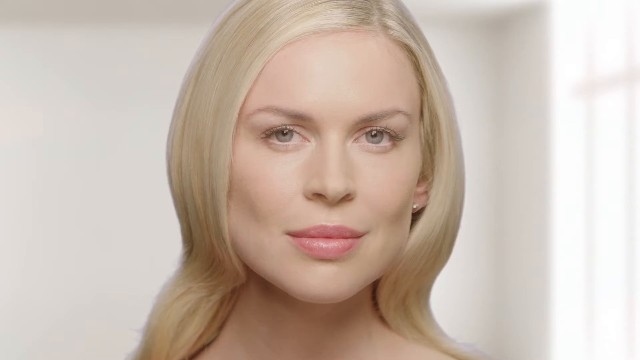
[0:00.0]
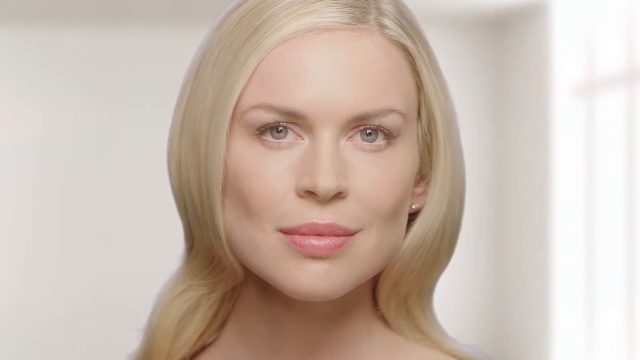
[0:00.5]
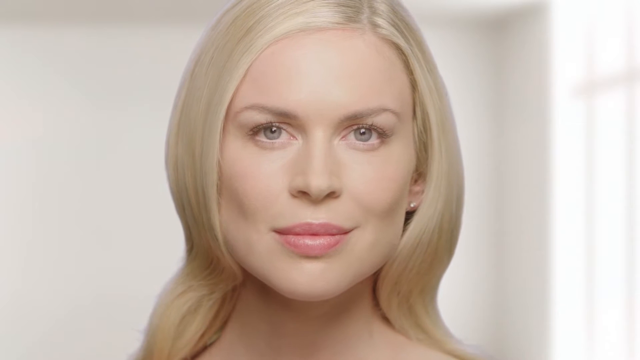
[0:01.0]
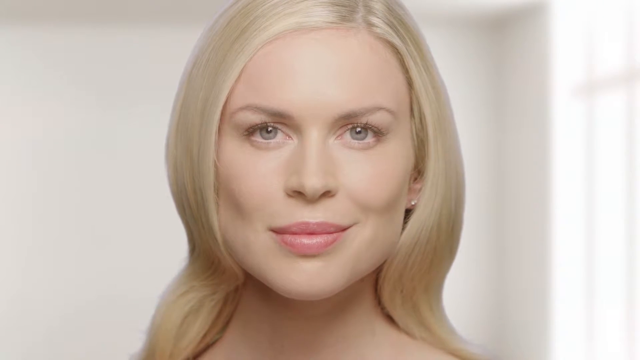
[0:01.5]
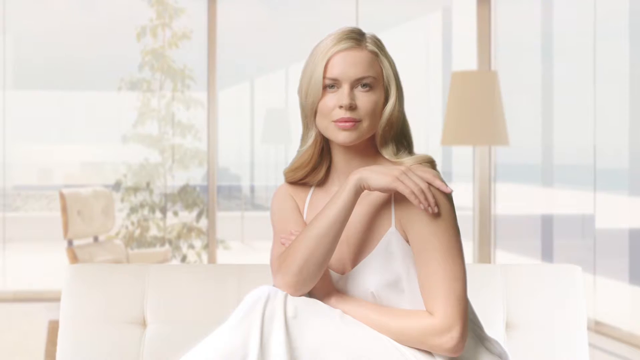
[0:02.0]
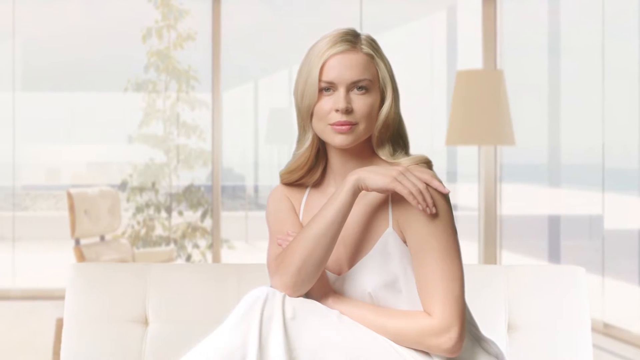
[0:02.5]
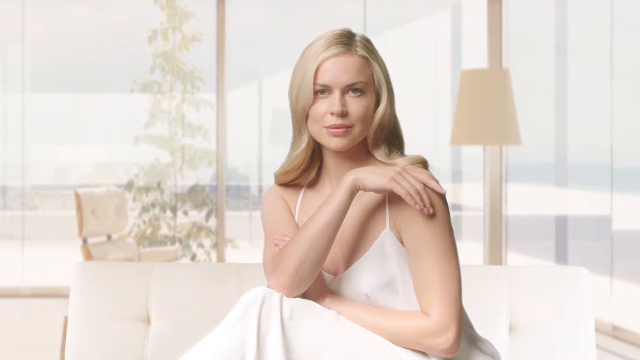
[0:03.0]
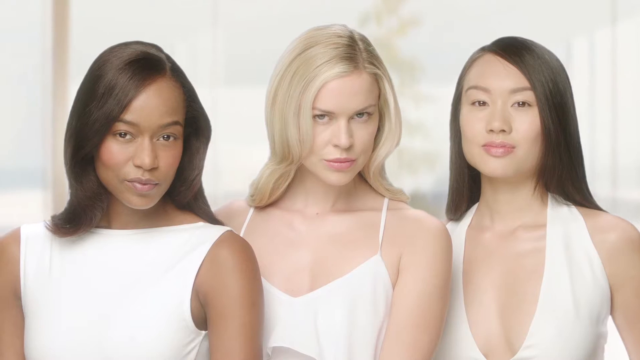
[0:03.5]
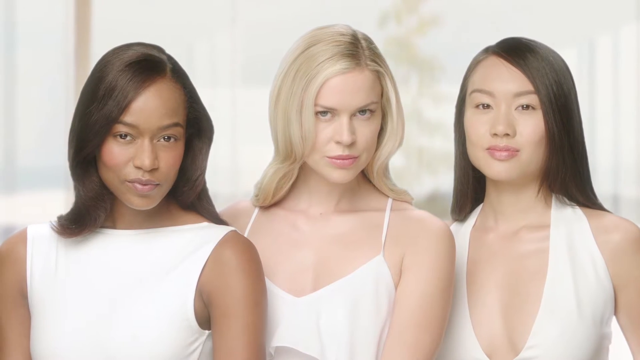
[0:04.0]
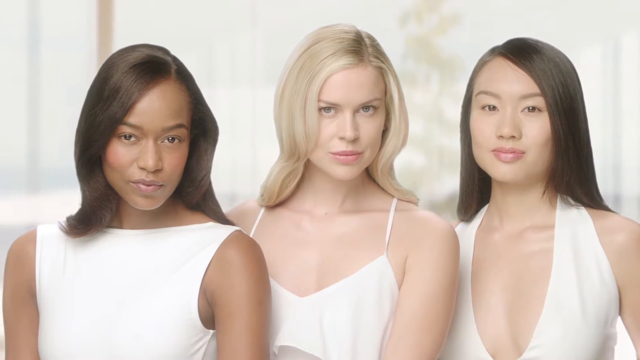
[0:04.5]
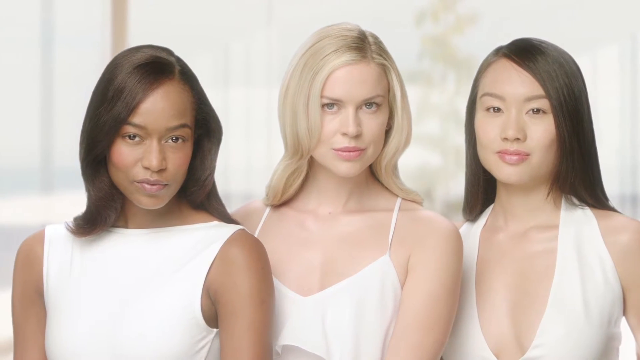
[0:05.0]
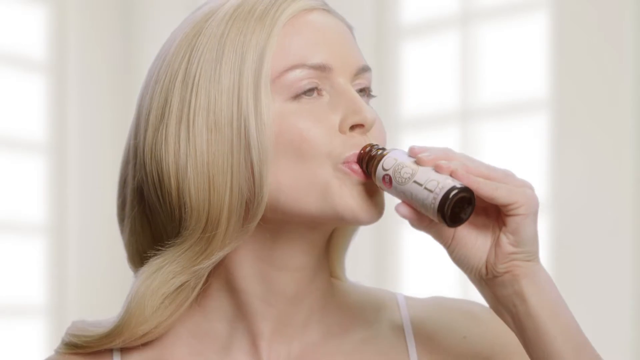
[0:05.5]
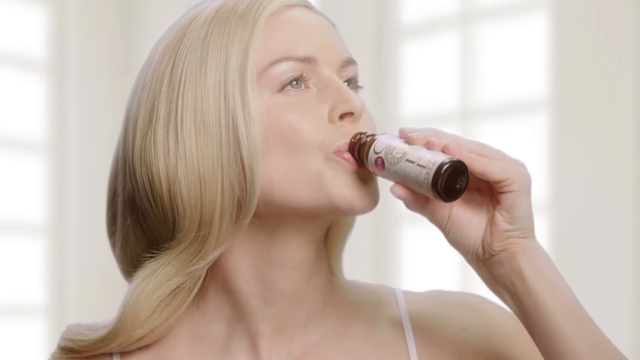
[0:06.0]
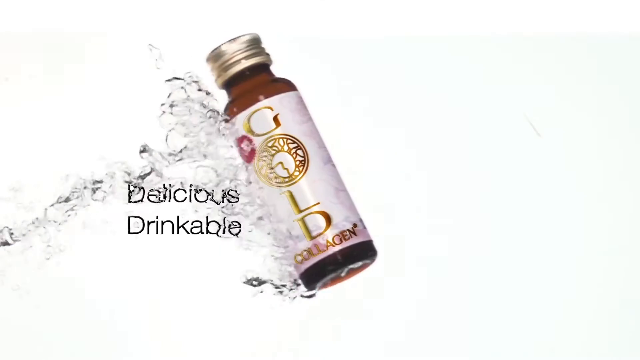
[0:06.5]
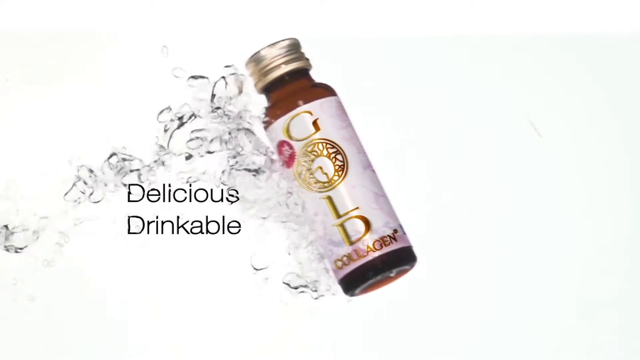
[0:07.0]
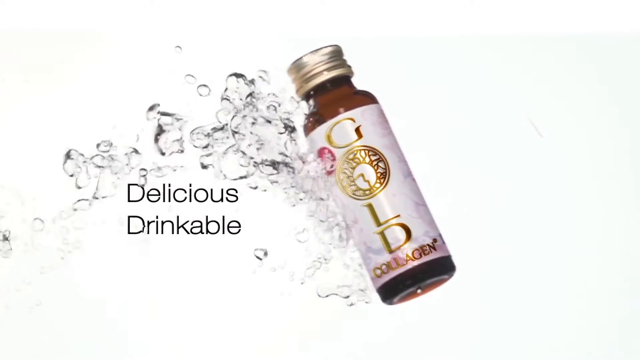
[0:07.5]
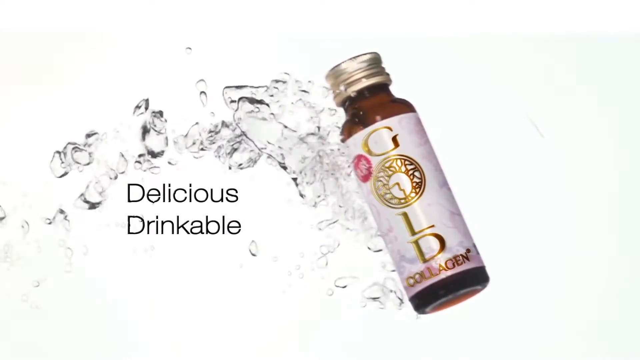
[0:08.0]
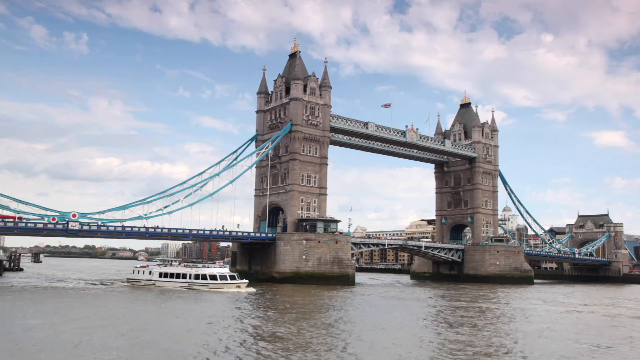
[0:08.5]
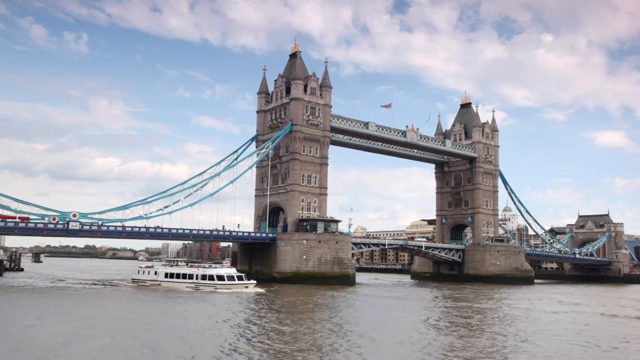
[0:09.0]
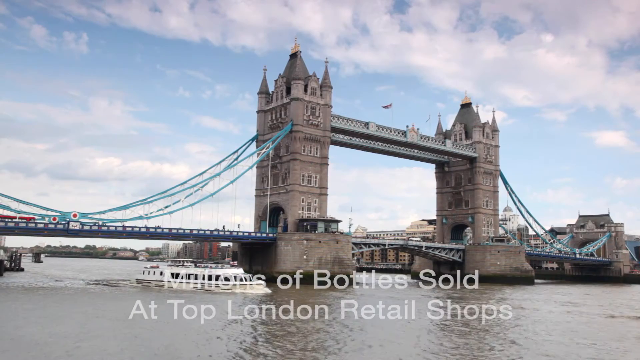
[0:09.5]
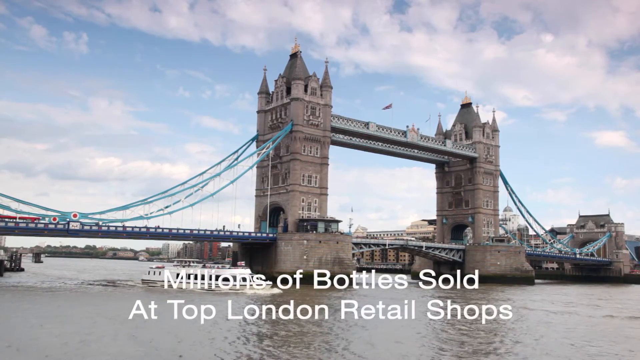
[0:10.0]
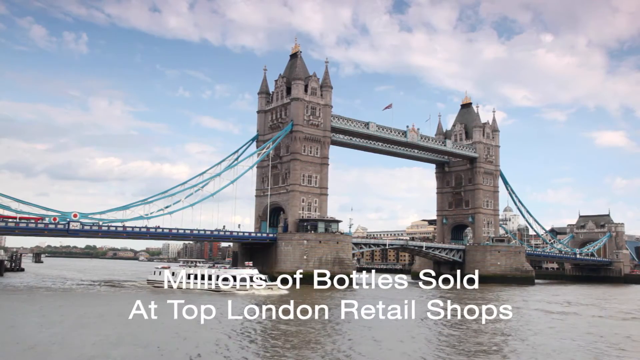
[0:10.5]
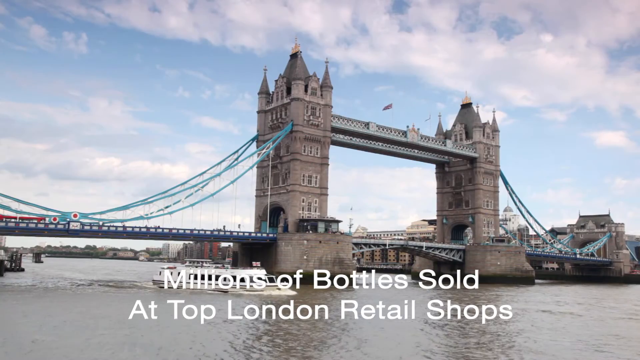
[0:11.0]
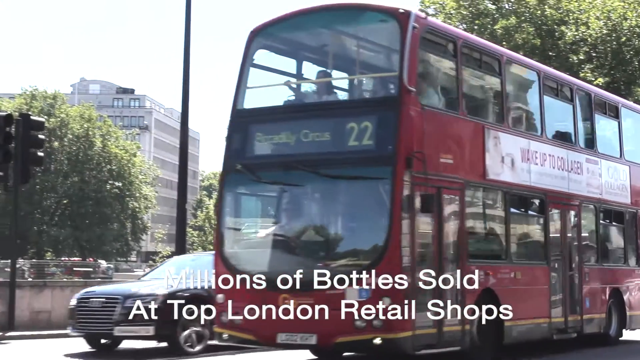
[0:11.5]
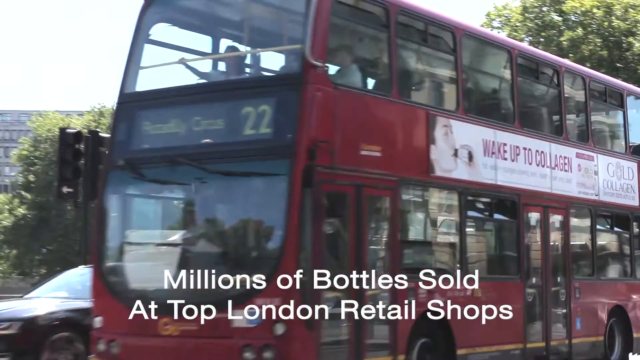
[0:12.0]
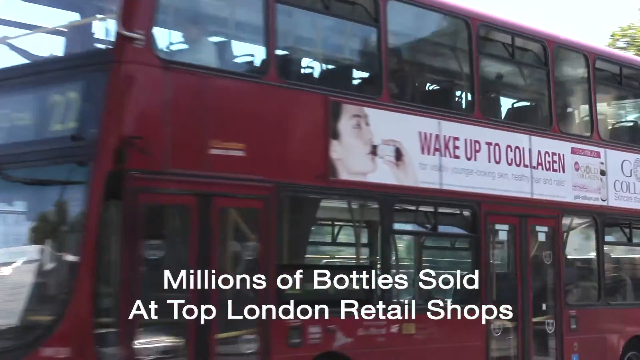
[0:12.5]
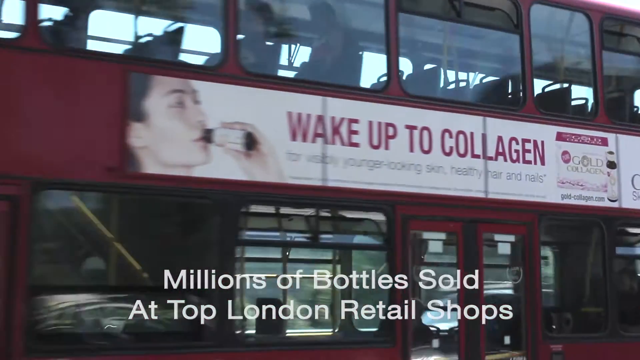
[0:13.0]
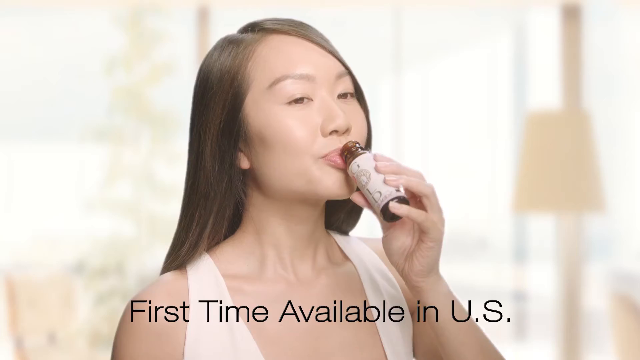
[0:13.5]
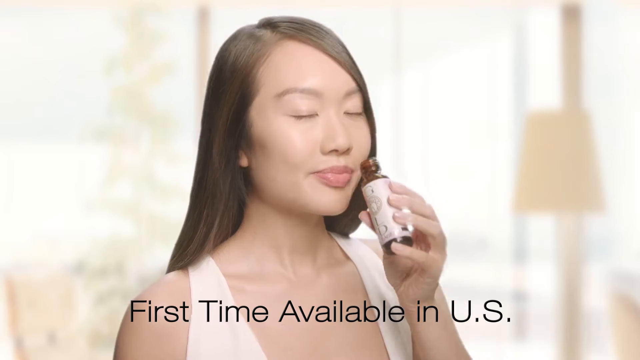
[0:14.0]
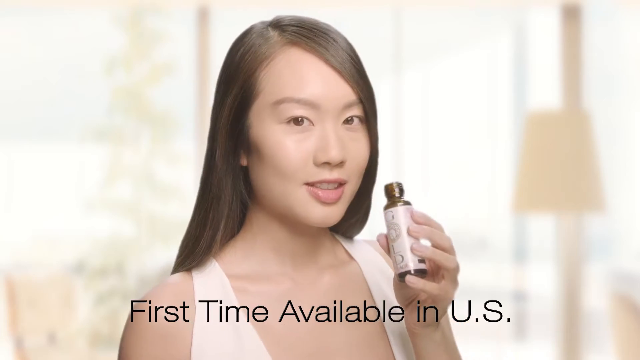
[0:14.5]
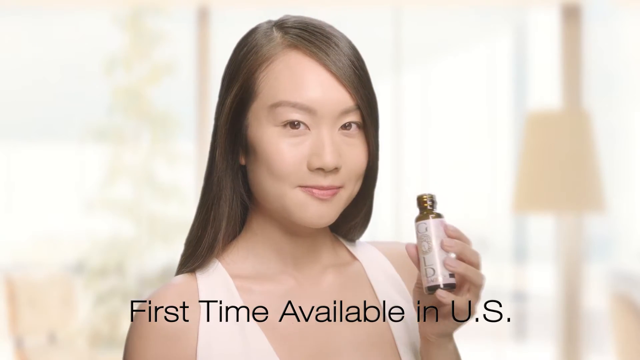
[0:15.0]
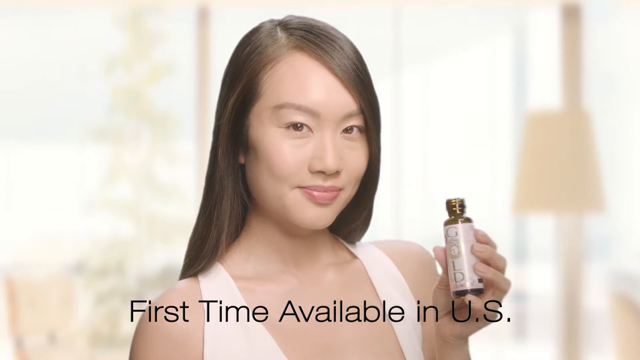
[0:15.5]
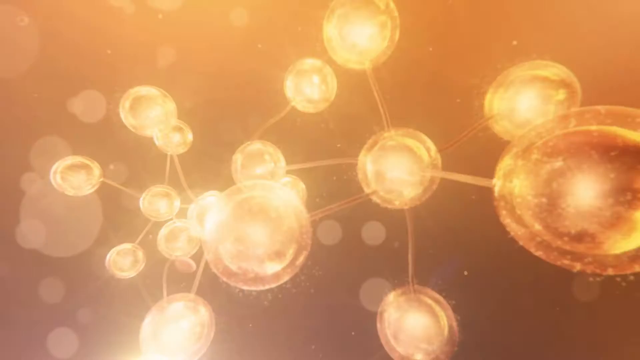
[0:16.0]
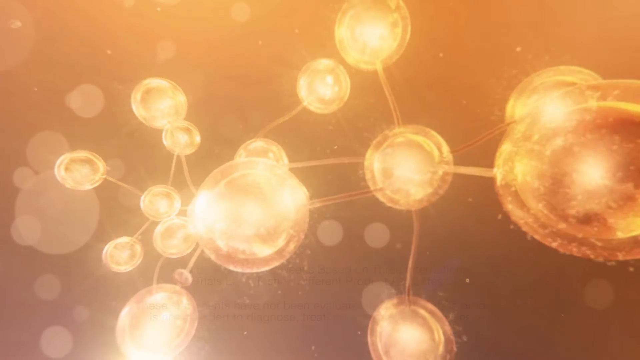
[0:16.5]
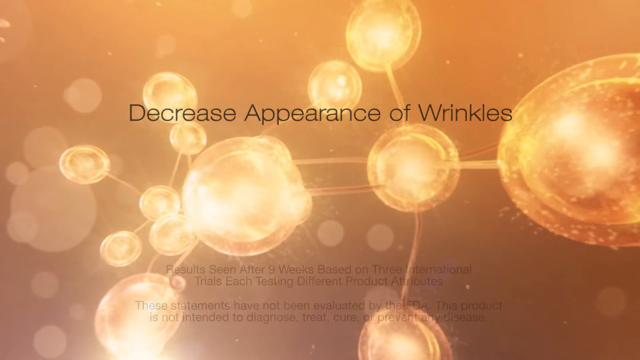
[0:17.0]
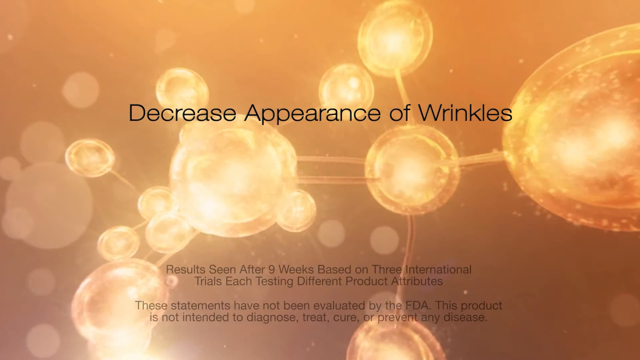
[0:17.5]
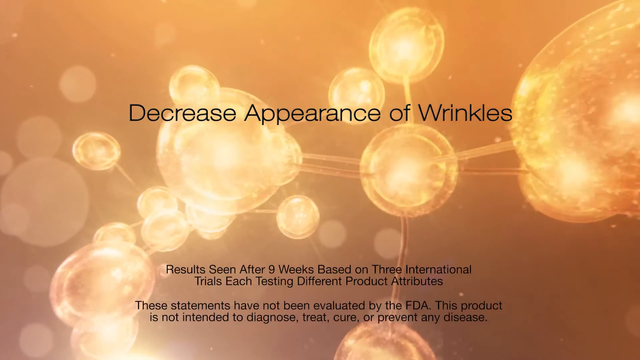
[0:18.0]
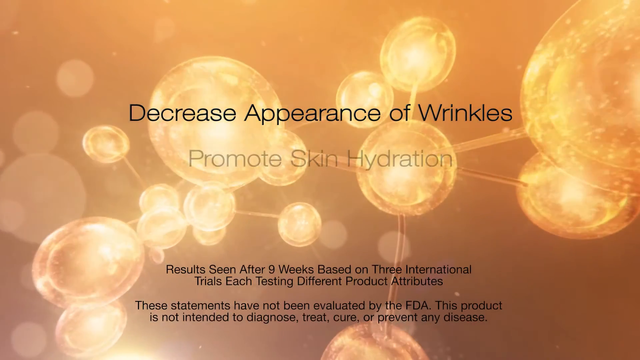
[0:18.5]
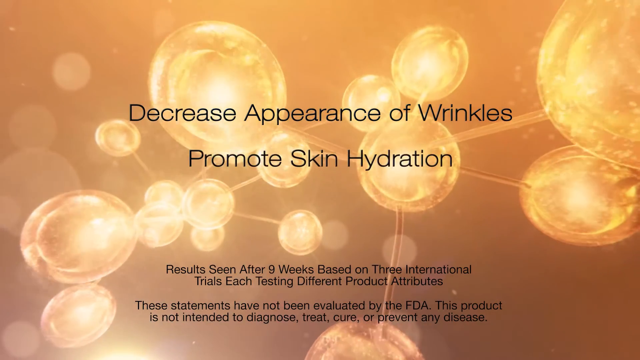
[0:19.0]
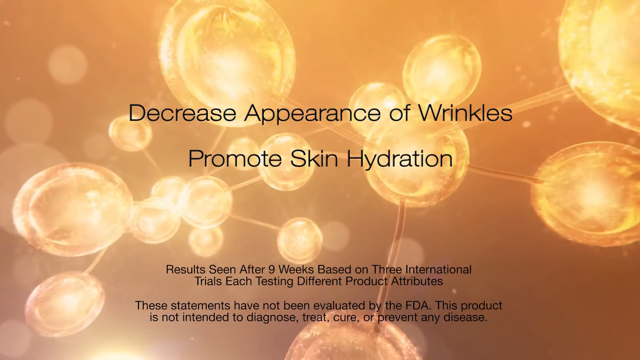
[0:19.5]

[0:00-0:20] From the start, a lady with flawless skin appears, looking very beautiful, with no wrinkles on her face and a nice bone and face structure. She gives a lovely smile, then she is seated, in a very warm environment. Three ladies are then shown together: one black, one Asian or Chinese, and a white lady in the middle, among them the first lady seen at the beginning. The white lady drinks the potion, and a bottle of the product is shown. Text appears reading "wake up to collagen, golden collagen for a healthy, younger looking skin, healthy hair and nails." The Asian girl then drinks it. The video states that for the first time in the US the product is available, that it decreases the appearance of wrinkles and promotes skin hydration, and that results can be seen after 9 weeks, based on 3 international trials.